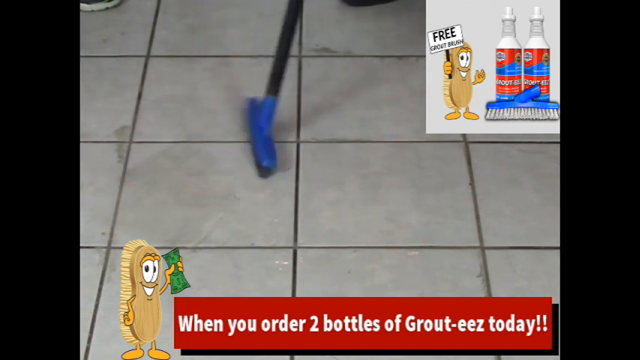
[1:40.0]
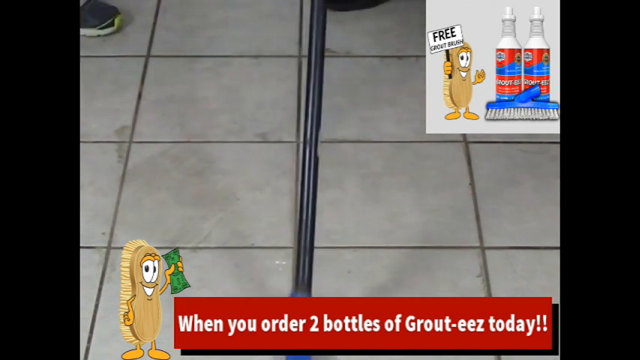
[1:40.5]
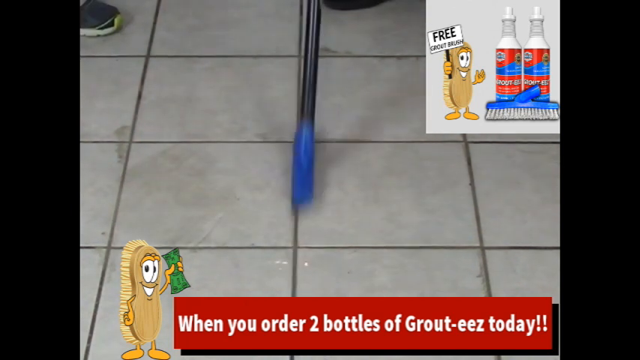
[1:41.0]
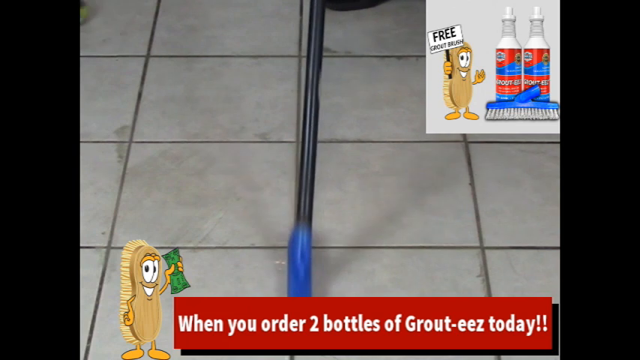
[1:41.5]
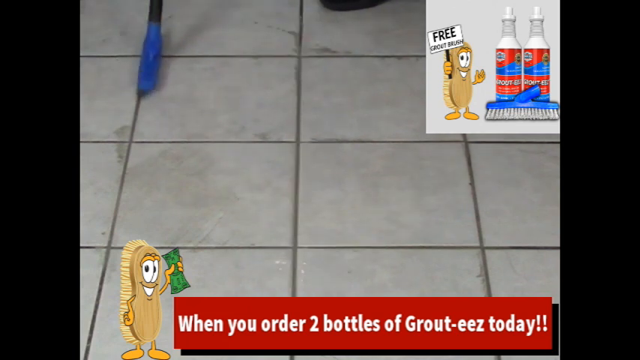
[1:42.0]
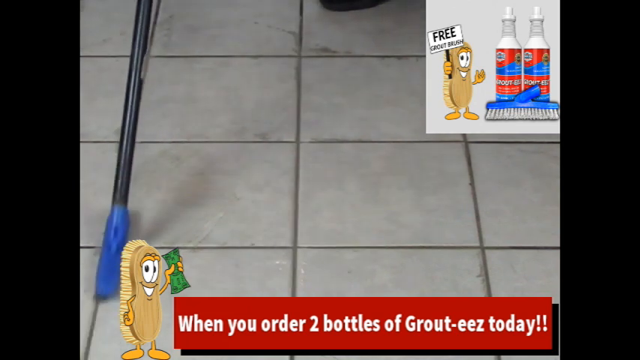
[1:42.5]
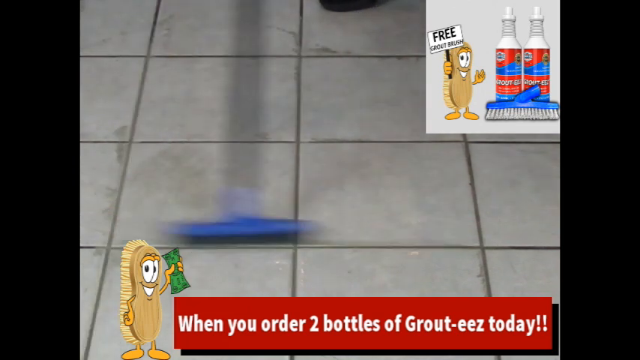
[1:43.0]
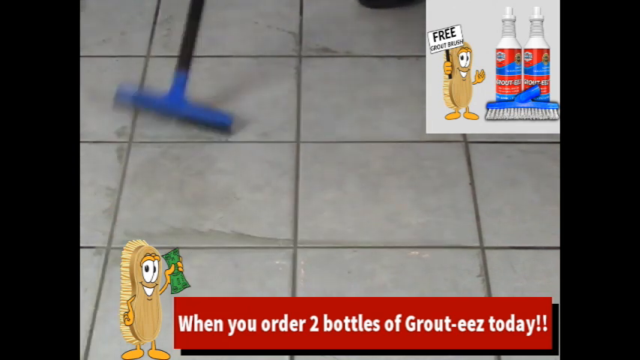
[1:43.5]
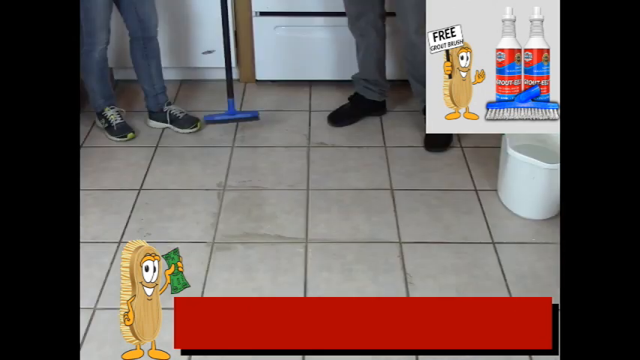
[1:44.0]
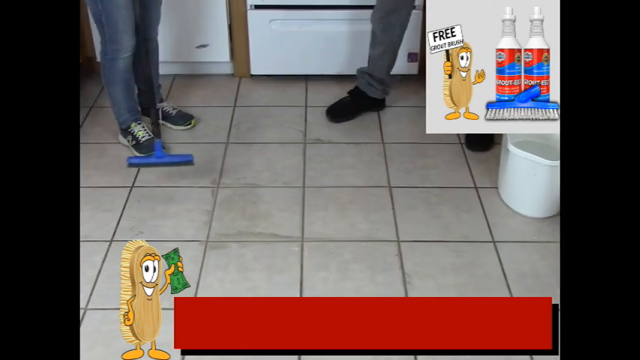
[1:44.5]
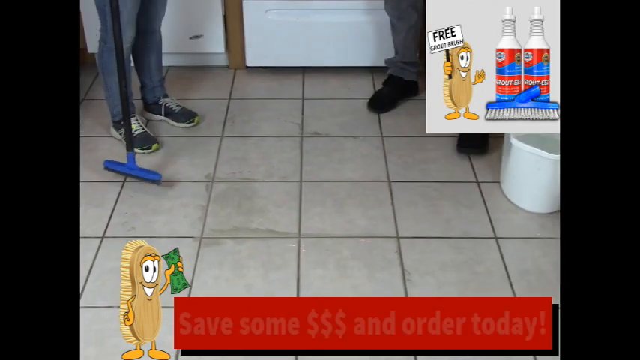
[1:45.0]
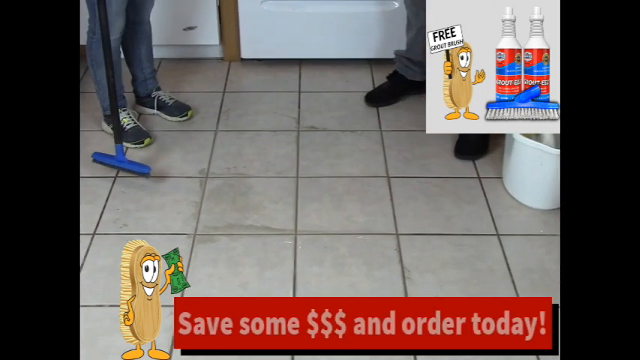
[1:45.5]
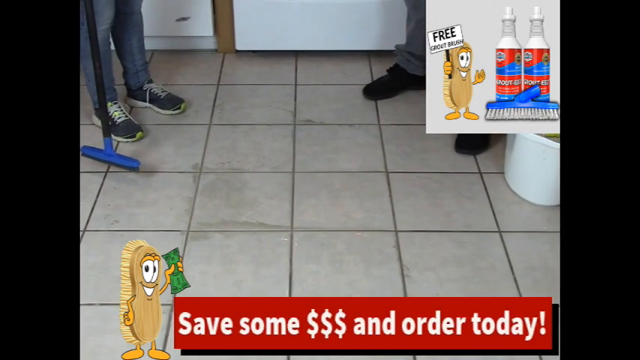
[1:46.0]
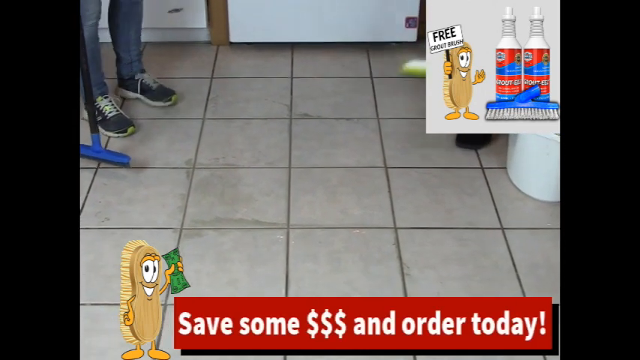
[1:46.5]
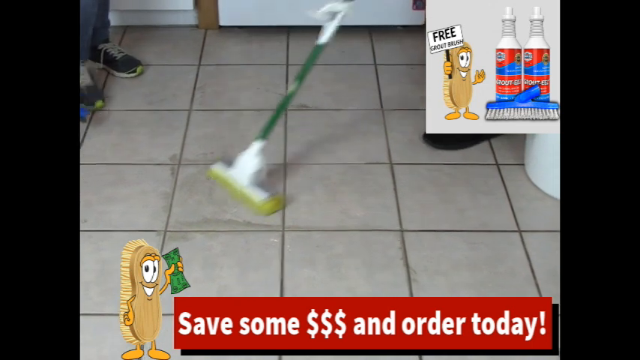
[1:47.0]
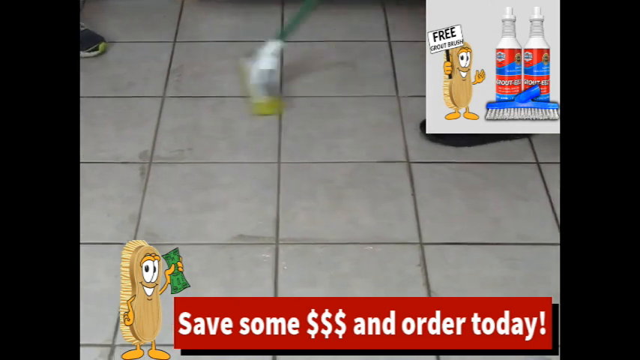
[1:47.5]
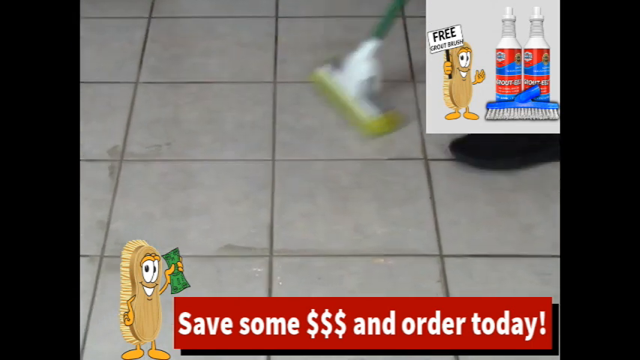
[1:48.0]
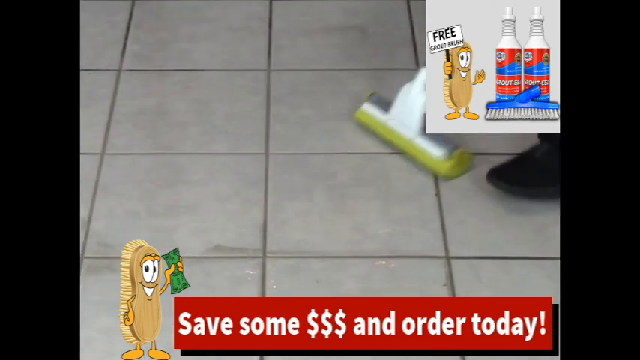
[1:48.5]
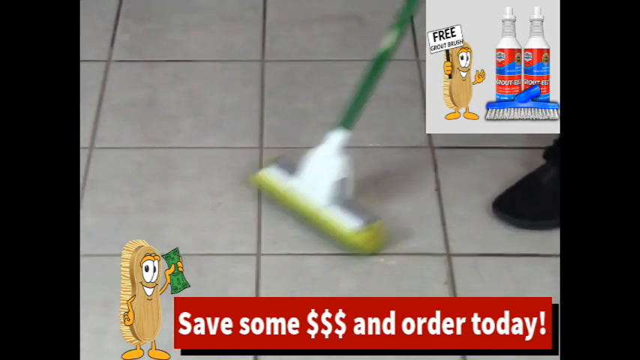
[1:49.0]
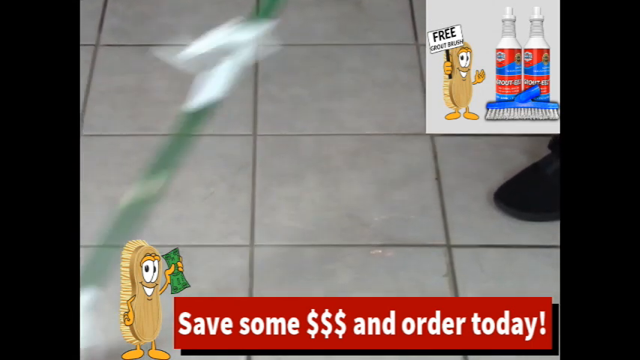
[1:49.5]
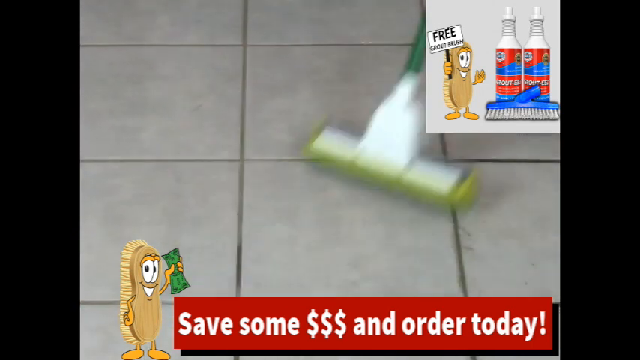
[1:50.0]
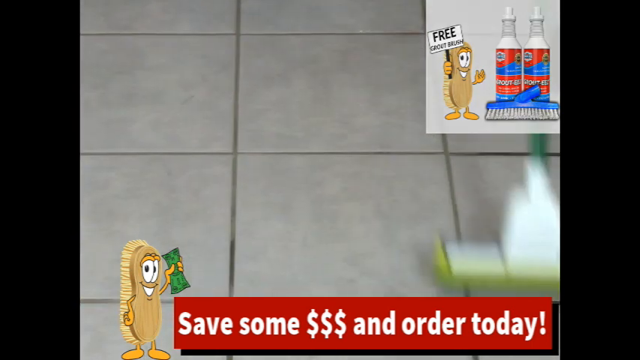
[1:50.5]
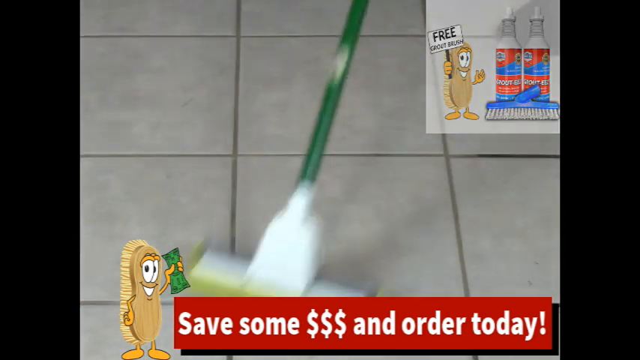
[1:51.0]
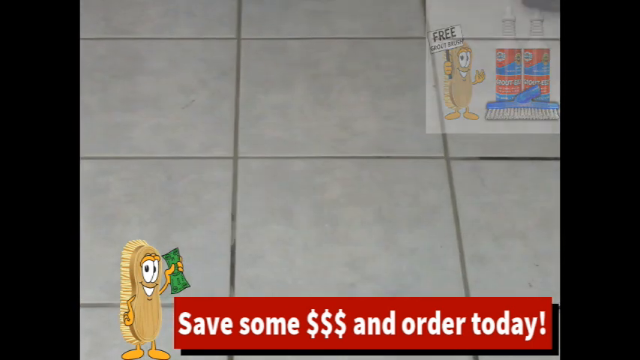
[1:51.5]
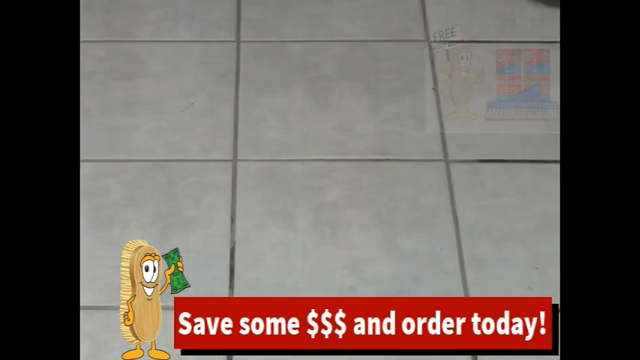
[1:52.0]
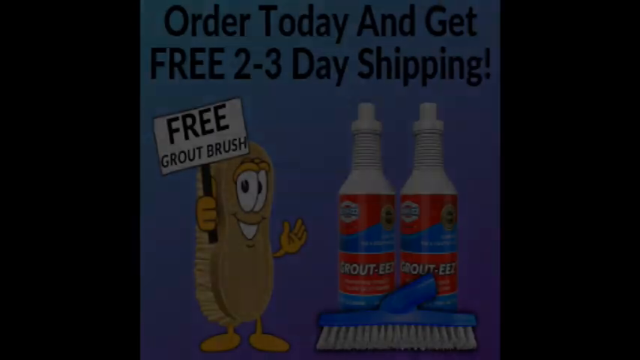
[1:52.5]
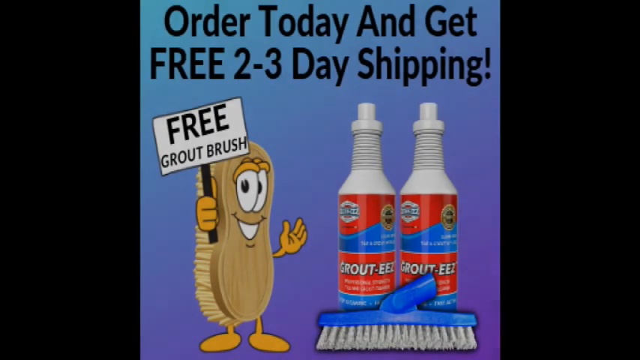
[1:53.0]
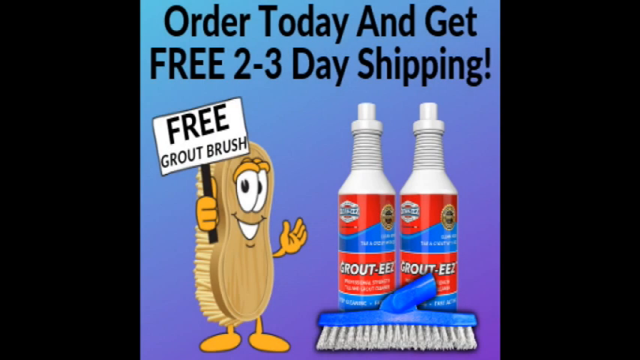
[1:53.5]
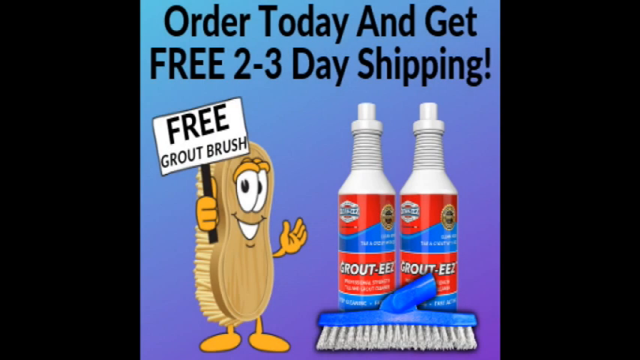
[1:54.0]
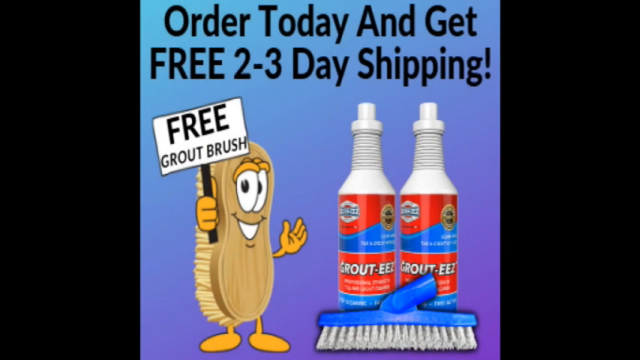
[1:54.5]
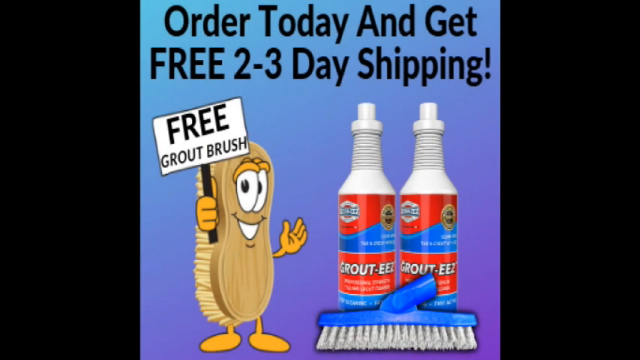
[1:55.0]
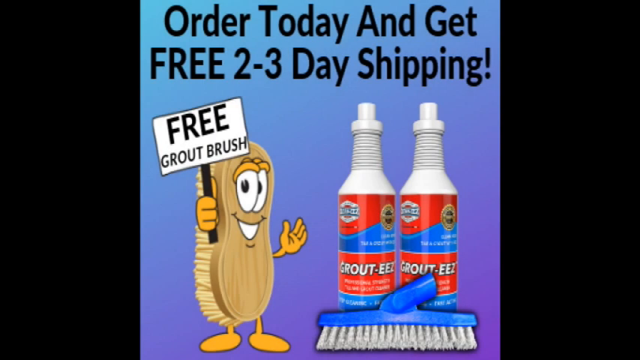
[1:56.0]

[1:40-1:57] Two black squares are on the left and right sides. At the top right are two white bottles with narrow tips, a red and blue label and some white lettering below, with a blue brush handle with gray bristles below them. To the left is a white sign with black lettering that says "free grout brush," on a black handle, held by a cartoon character with a brown handle, light brown bristles, brown hands, brown feet and black eyes. The same creature is at the bottom left holding a green dollar bill, beside a red box with white lettering that says "when you order two bottles of grout, easy today." On the tiled floor, a person holds a black-handled blue brush along the black grout lines, cleaning the grout. One person on the right side has black shoes and gray pants; the other, in blue runners with white laces and blue jeans, holds the black-handled blue brush. A white bucket is on the right side, and there is a green handle with an orange, yellow and white sponge that they use to clean the dirt off the tile. The scene changes to a blue background with black lettering at the top that says "order today and get free two to three day shipping." The two bottles are on the right side, with white ribbed narrow tops, a blue and red label, and white lettering that says "grout," with a blue lining below and more white lettering. Below that is a blue handle with gray bristles. On the left side is a gray-handled light brown brush with brown hands, brown feet, black-dotted white eyes and white teeth, holding a black-handled white sign with black letters that says "free grout brush."